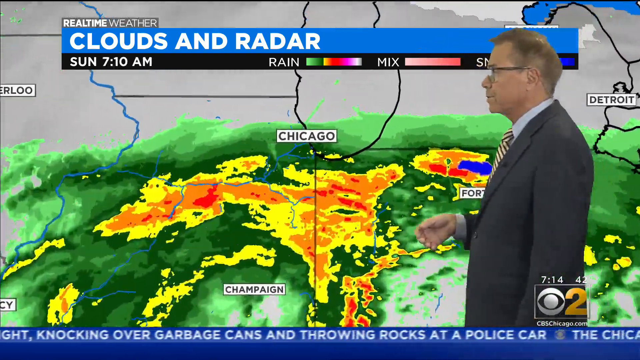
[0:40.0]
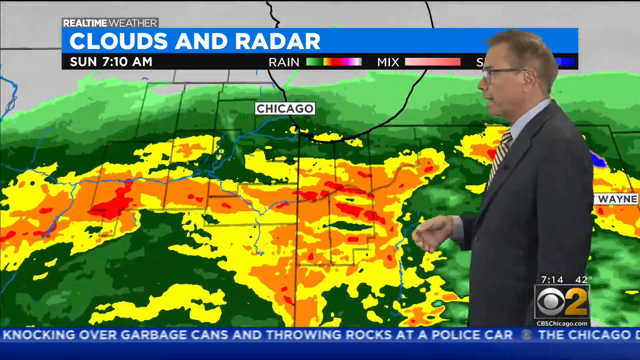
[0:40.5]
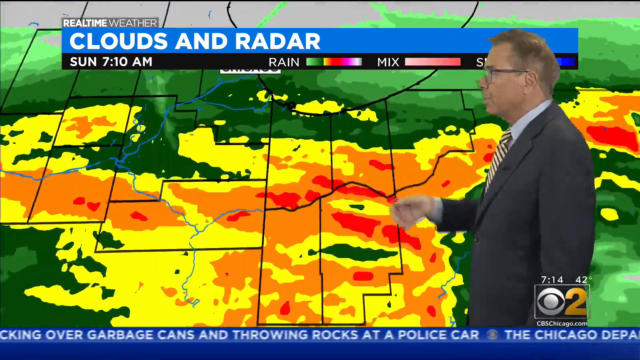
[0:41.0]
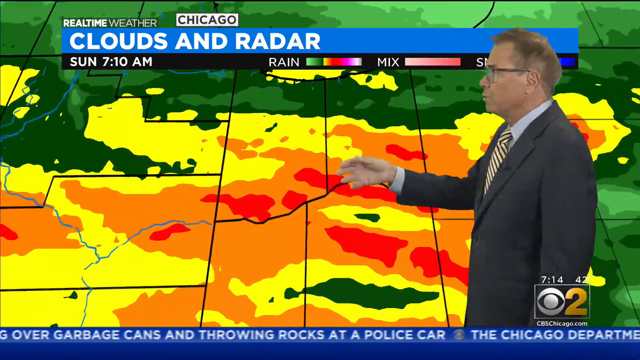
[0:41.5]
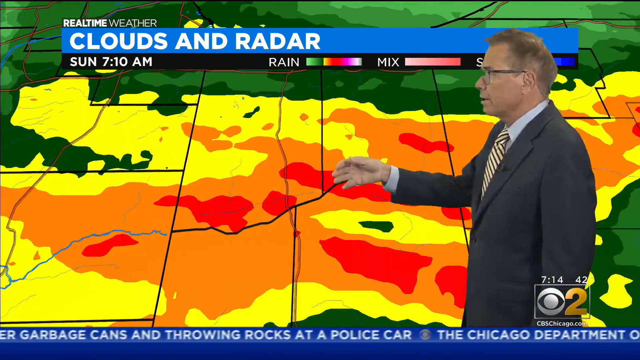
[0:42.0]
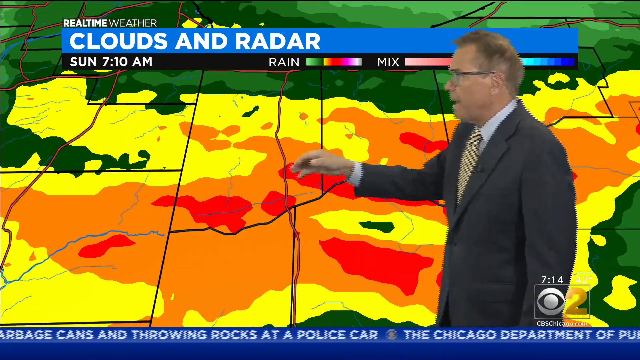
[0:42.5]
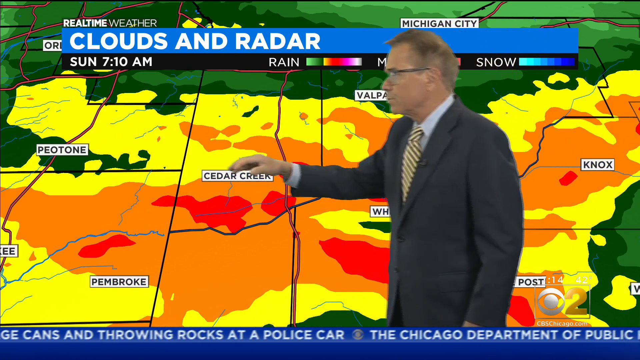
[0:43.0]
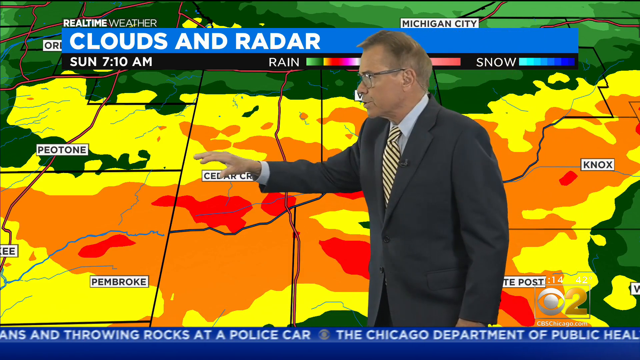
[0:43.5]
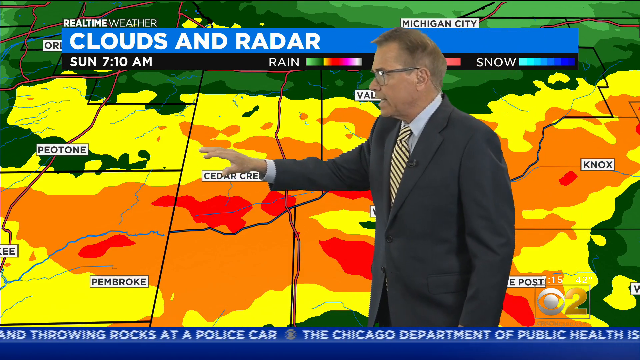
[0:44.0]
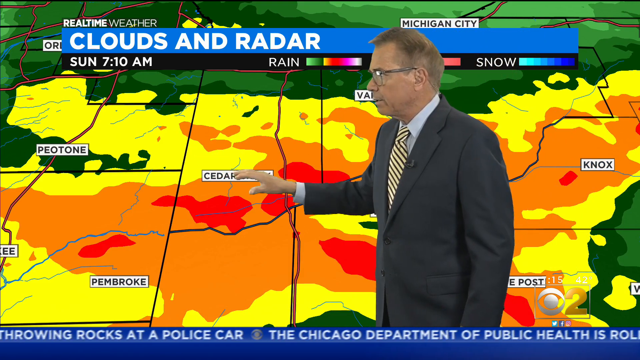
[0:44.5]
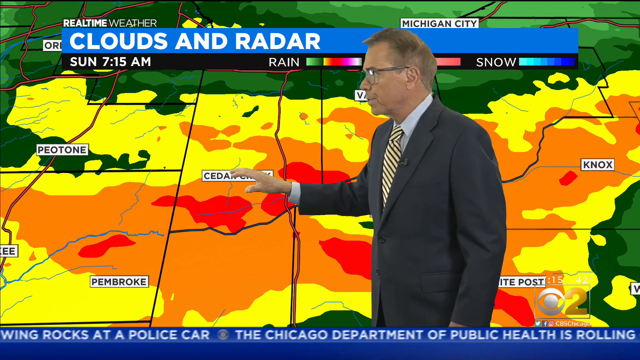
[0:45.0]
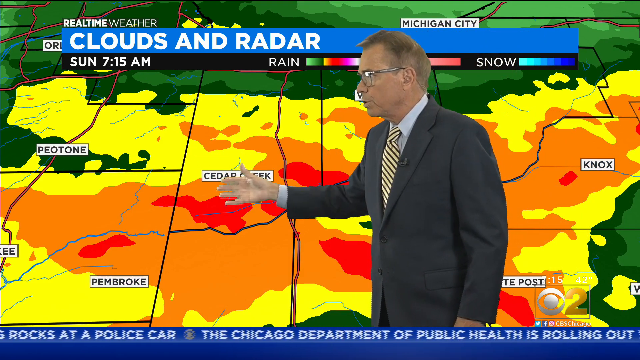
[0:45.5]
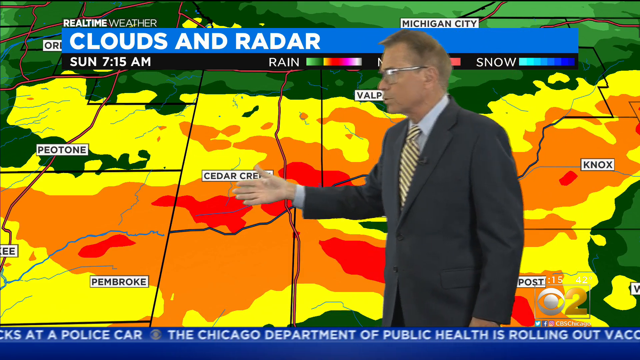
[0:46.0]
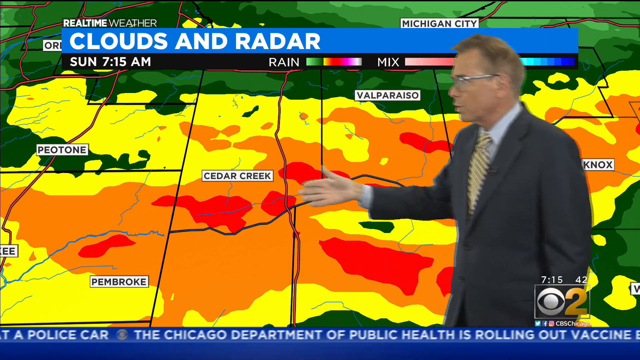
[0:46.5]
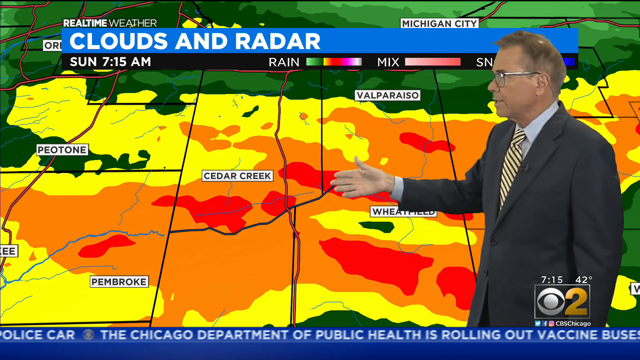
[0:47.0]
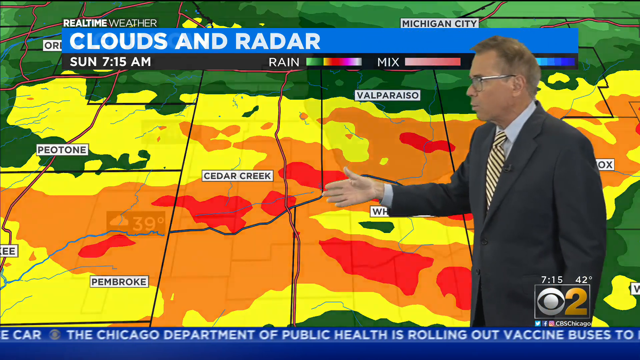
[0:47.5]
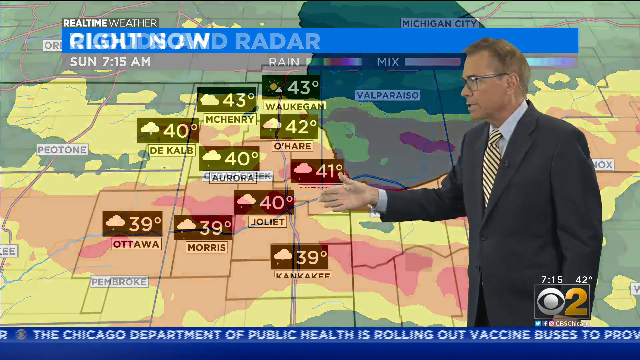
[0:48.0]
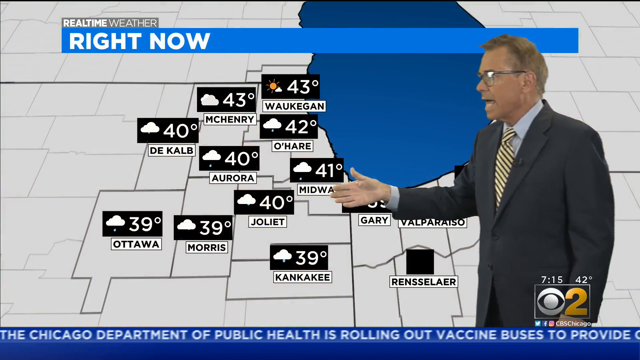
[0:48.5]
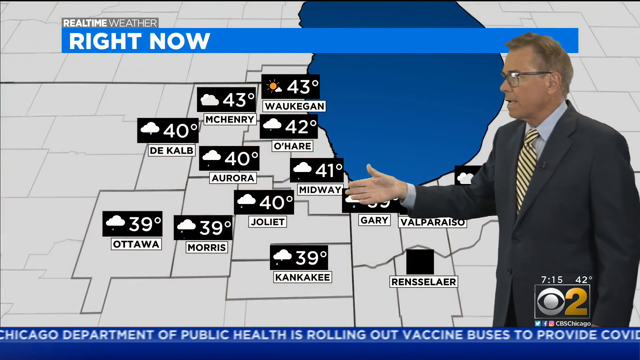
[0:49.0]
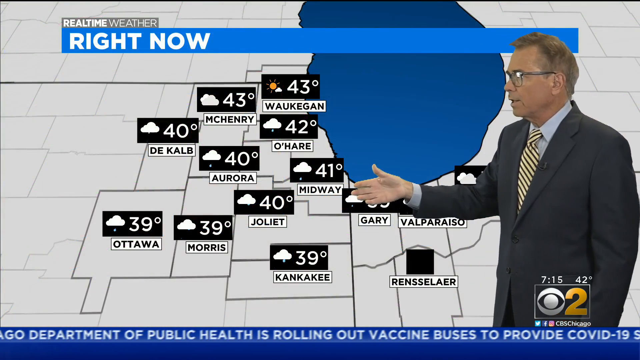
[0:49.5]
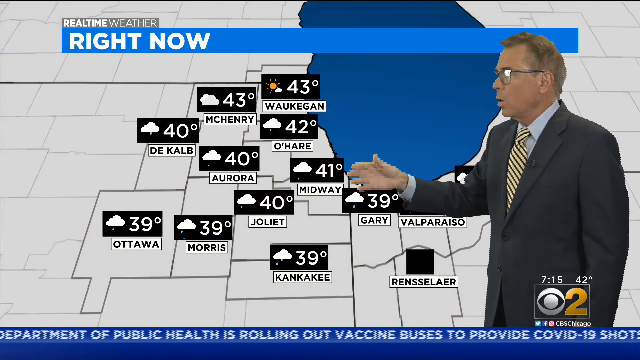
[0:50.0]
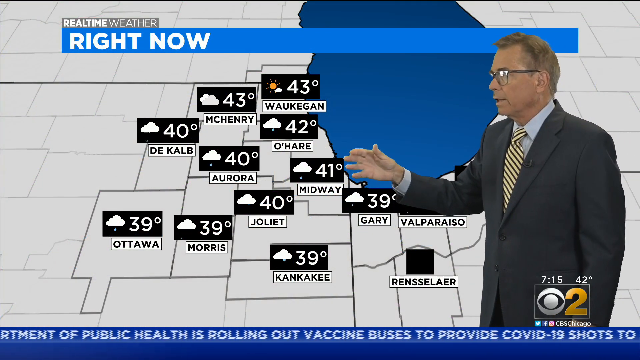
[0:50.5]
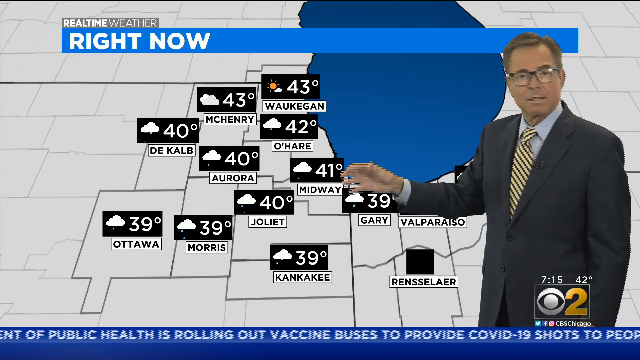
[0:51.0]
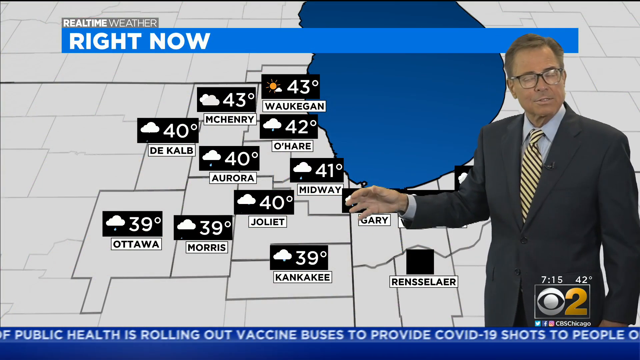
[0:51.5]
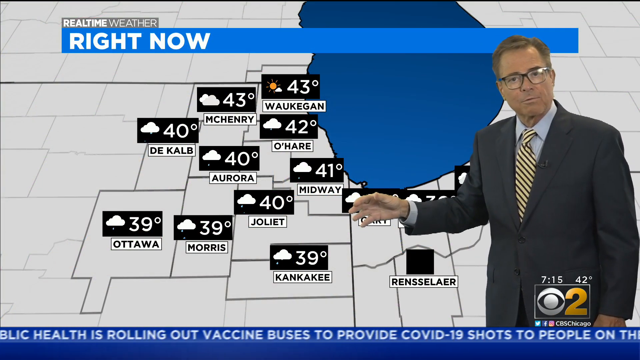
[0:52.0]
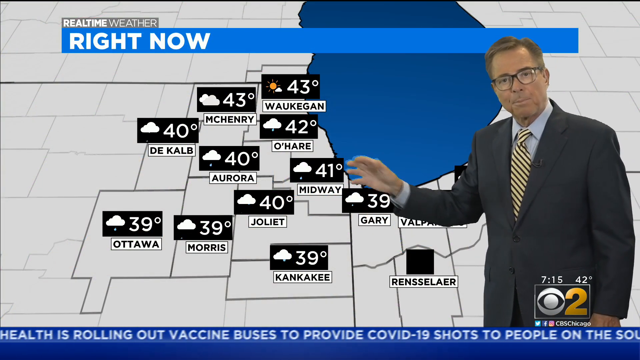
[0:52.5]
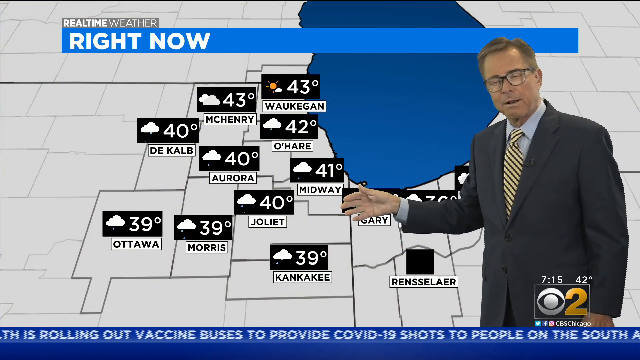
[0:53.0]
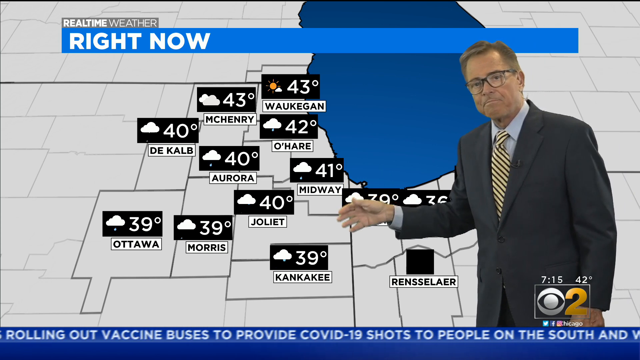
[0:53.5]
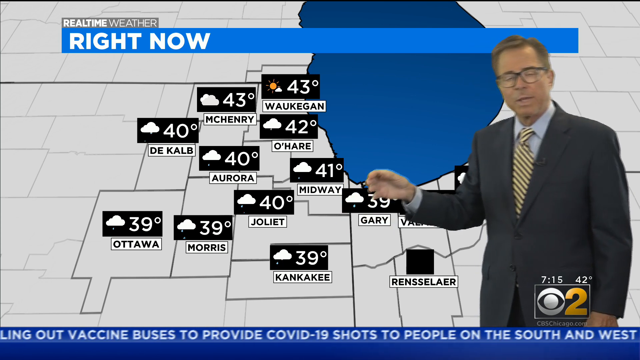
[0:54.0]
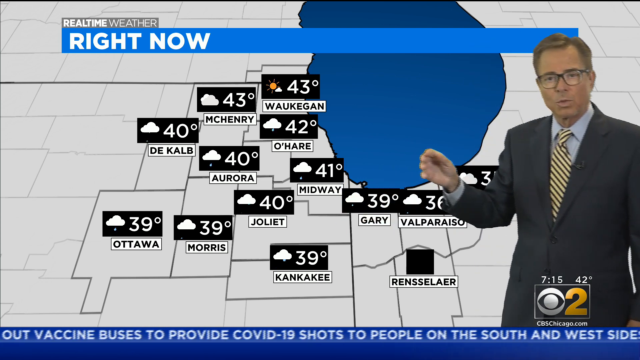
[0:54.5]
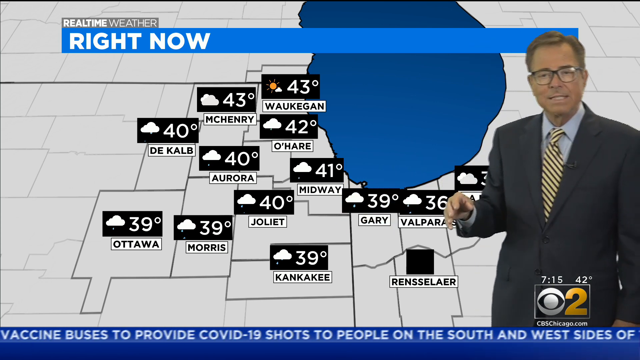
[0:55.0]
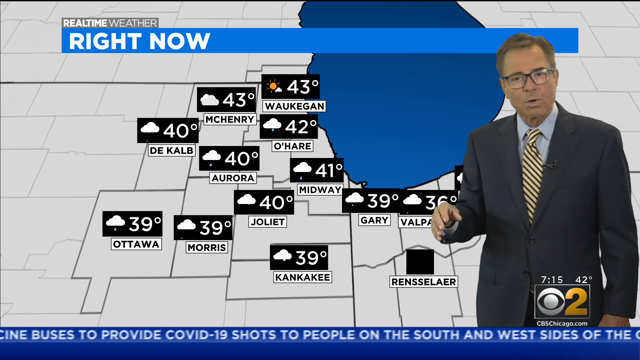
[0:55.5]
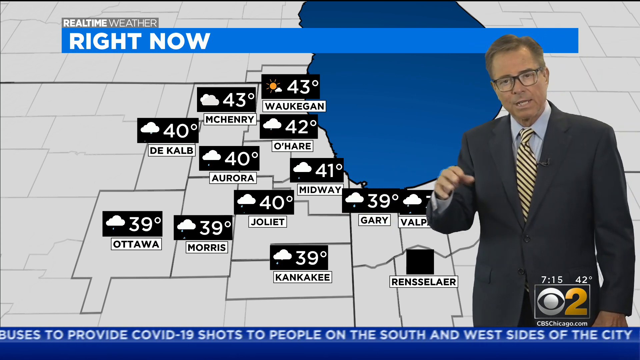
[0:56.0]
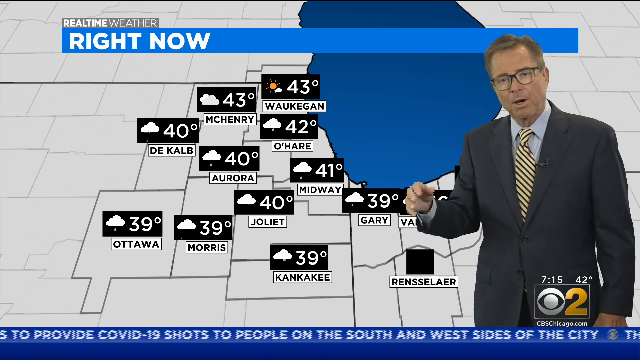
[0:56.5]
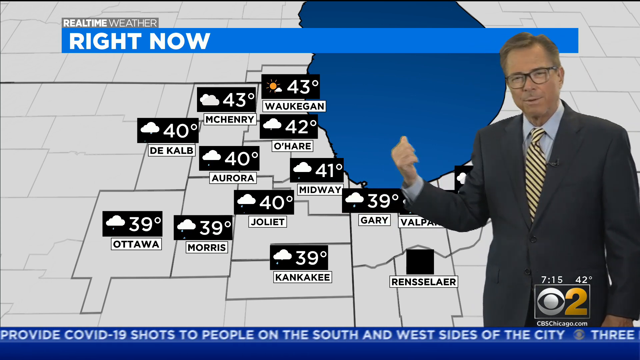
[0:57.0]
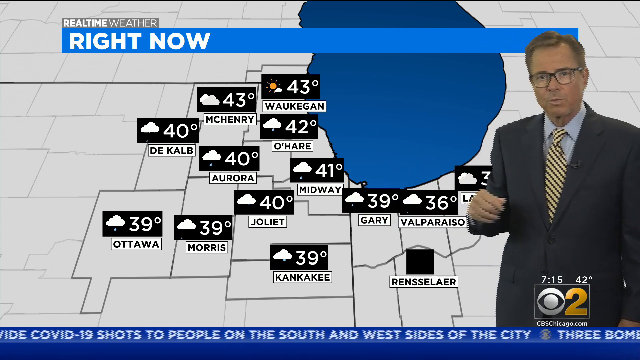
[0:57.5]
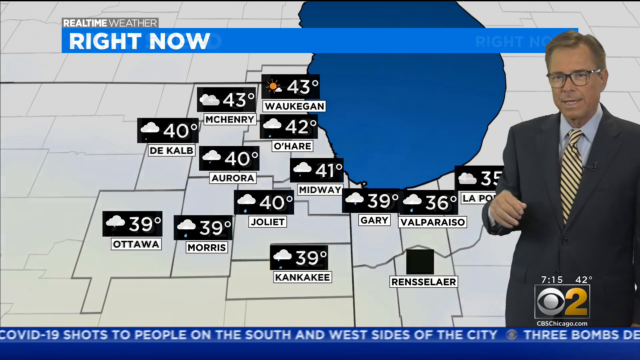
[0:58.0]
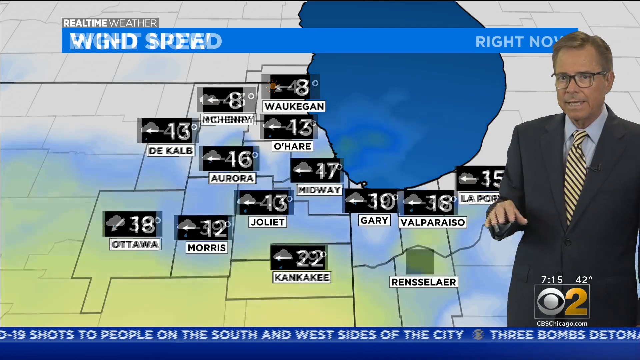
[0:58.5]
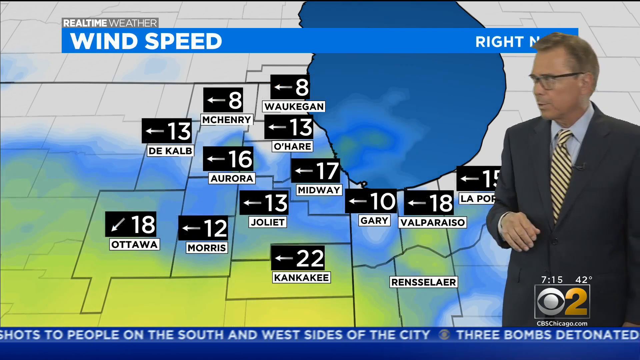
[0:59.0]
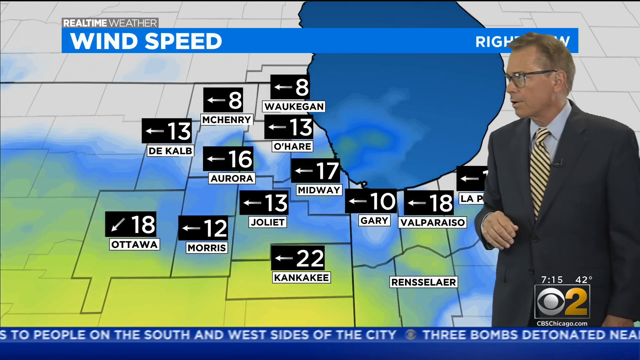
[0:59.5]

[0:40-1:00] Mr. Ed continues explaining. Ottawa is at 39 degrees, with a wind speed of 18. Joliet is at 40 degrees. Different cities are shown with their forecasts.